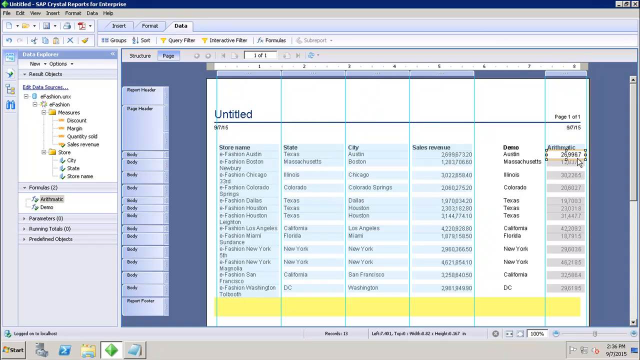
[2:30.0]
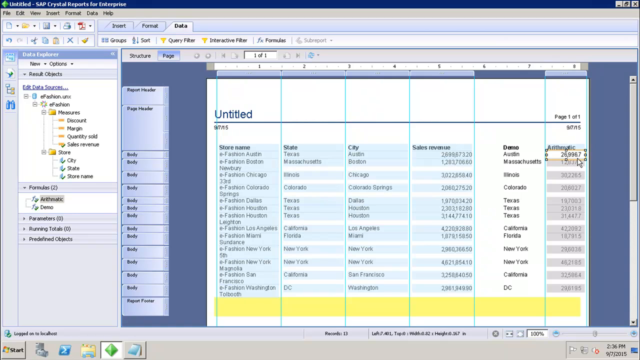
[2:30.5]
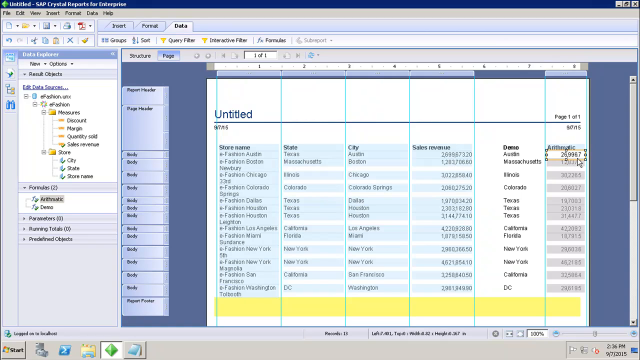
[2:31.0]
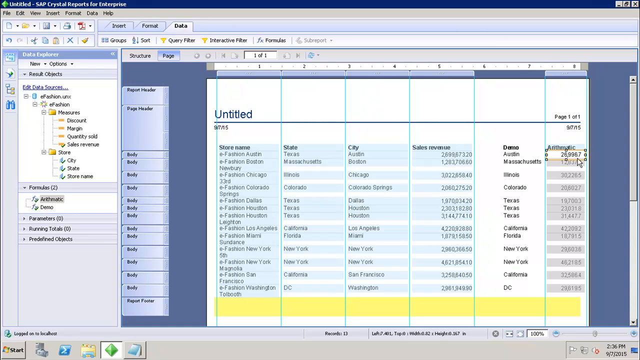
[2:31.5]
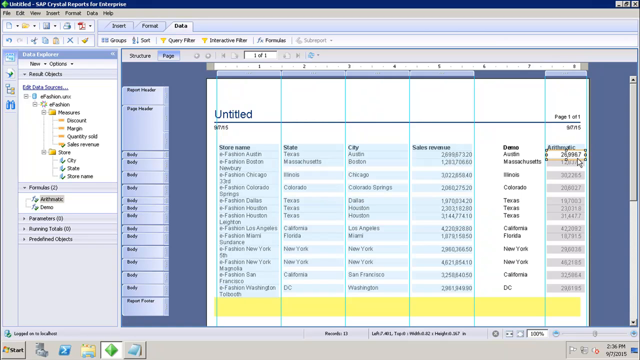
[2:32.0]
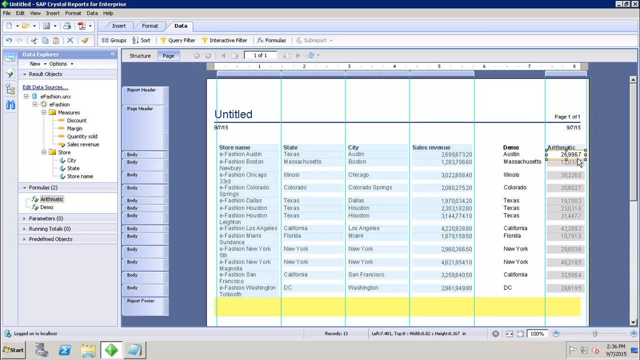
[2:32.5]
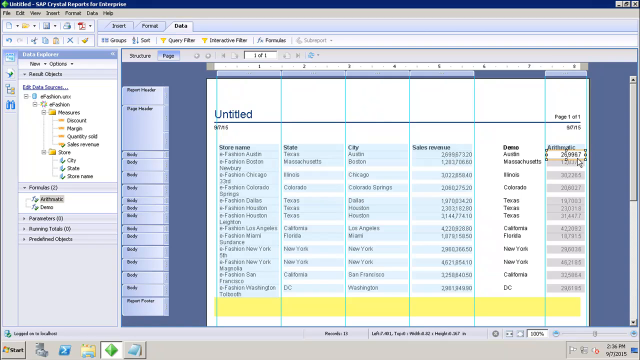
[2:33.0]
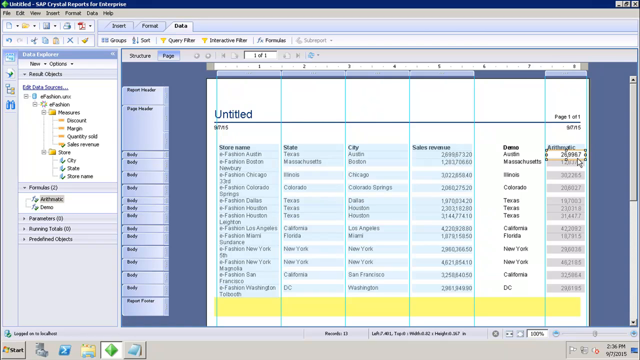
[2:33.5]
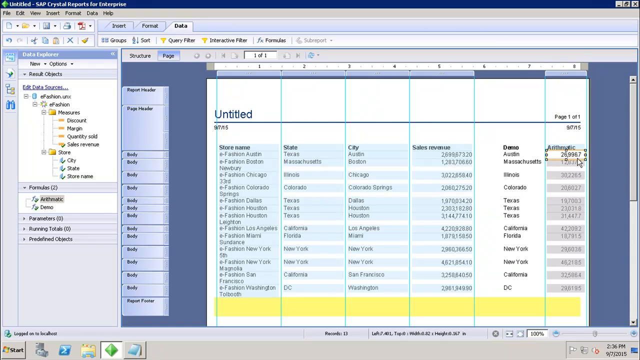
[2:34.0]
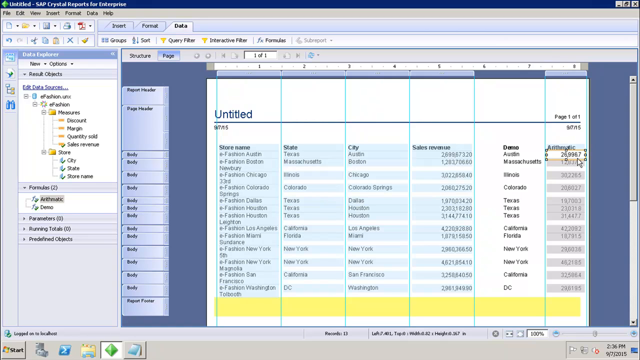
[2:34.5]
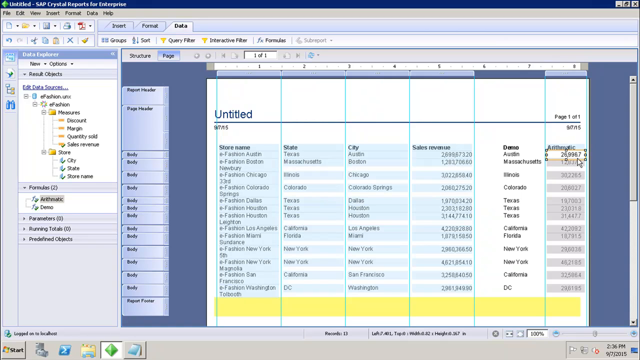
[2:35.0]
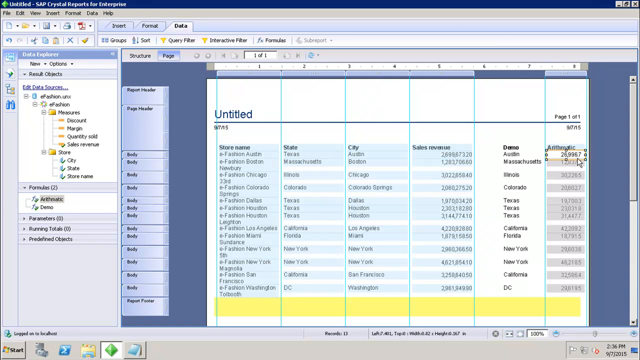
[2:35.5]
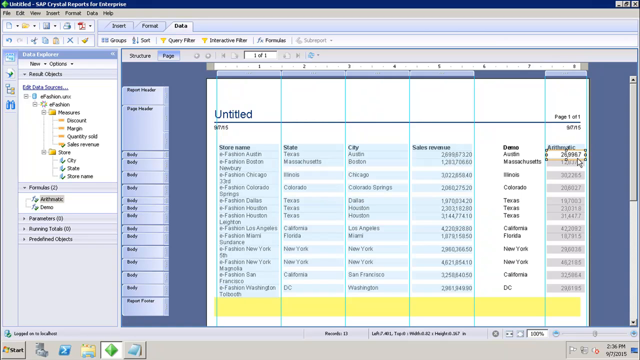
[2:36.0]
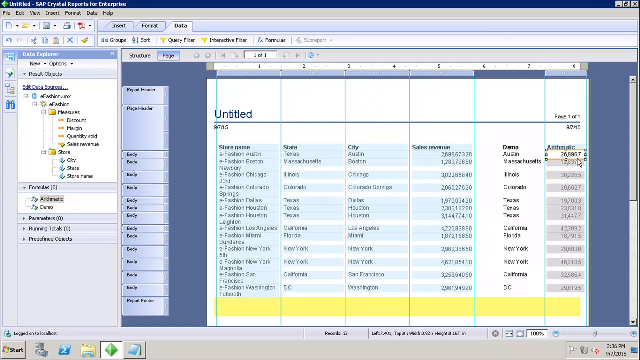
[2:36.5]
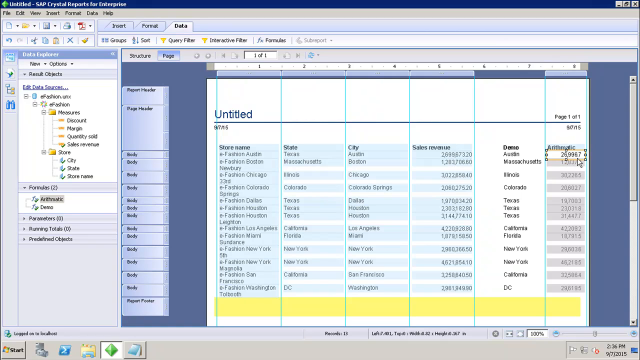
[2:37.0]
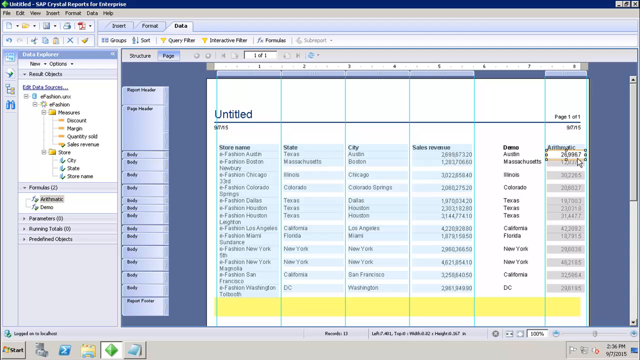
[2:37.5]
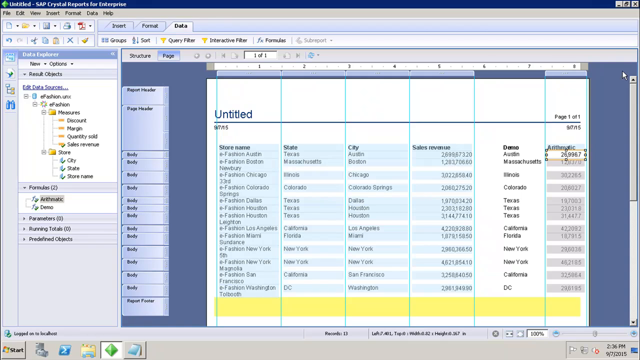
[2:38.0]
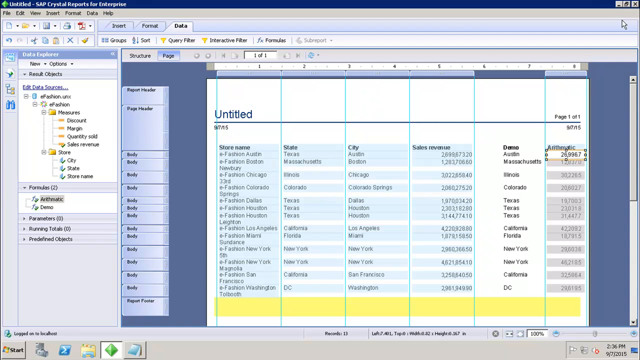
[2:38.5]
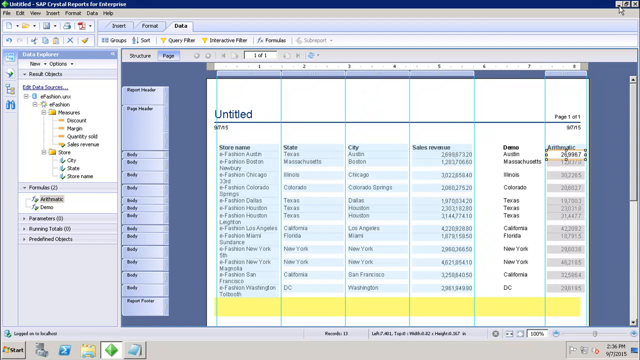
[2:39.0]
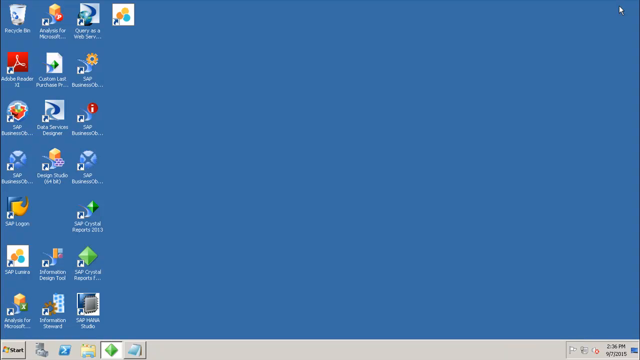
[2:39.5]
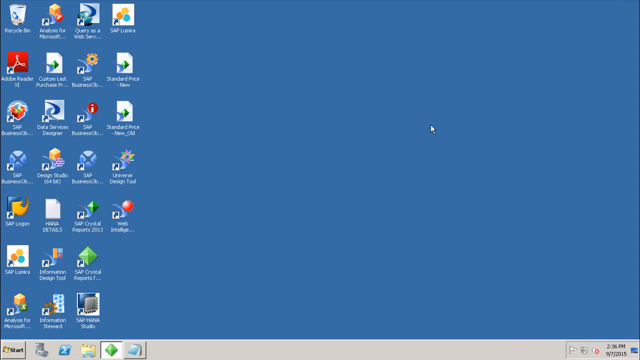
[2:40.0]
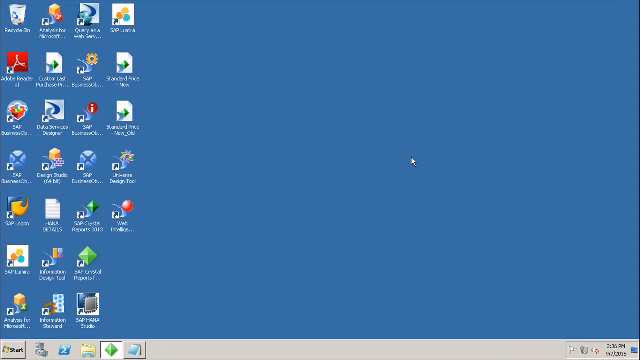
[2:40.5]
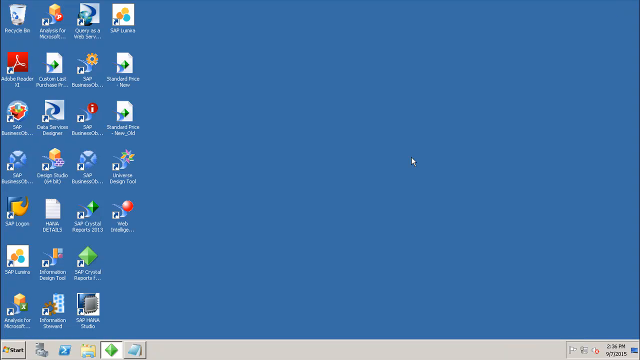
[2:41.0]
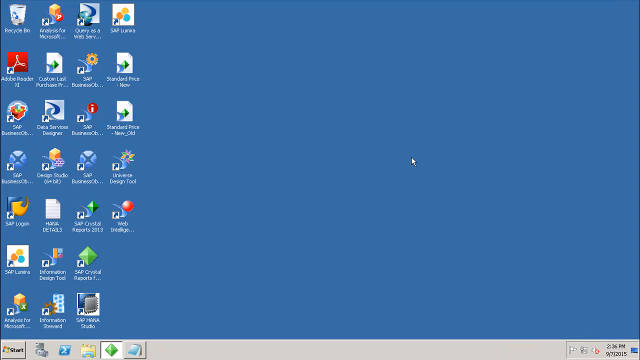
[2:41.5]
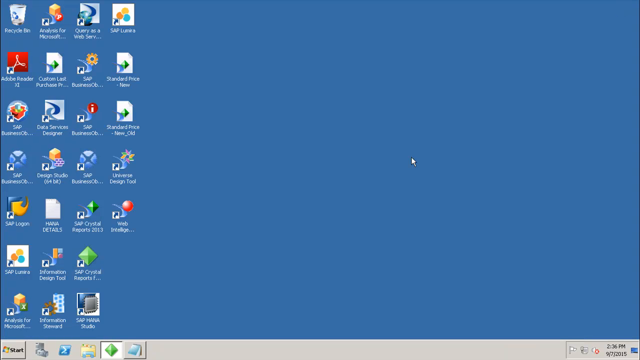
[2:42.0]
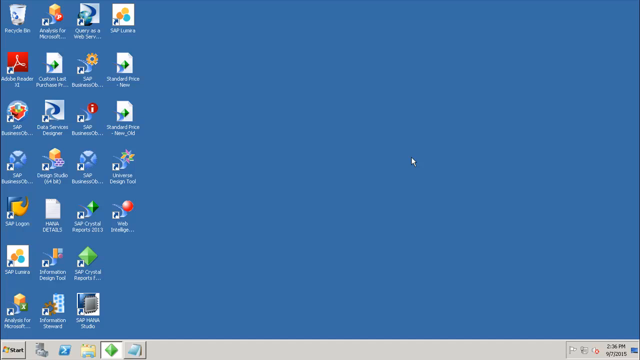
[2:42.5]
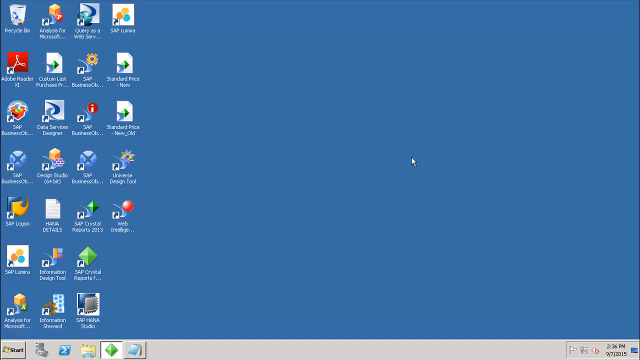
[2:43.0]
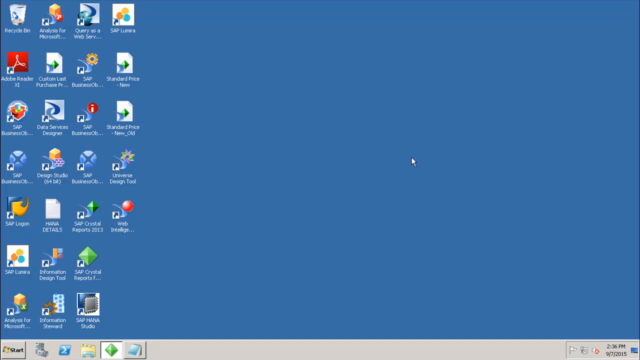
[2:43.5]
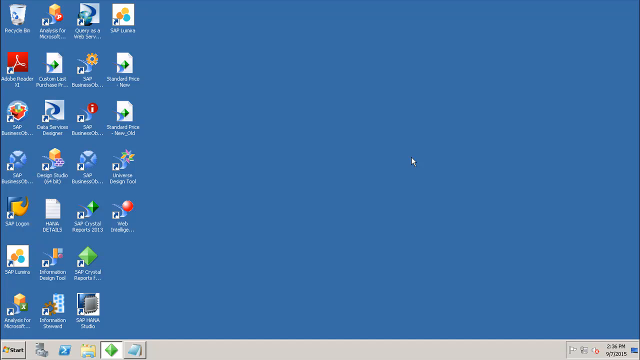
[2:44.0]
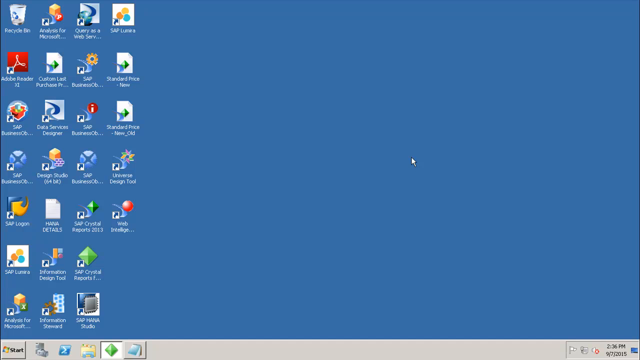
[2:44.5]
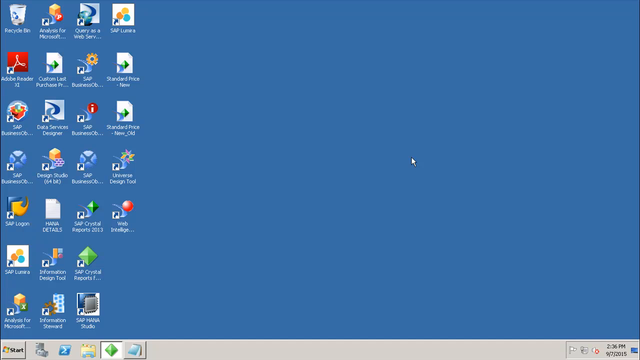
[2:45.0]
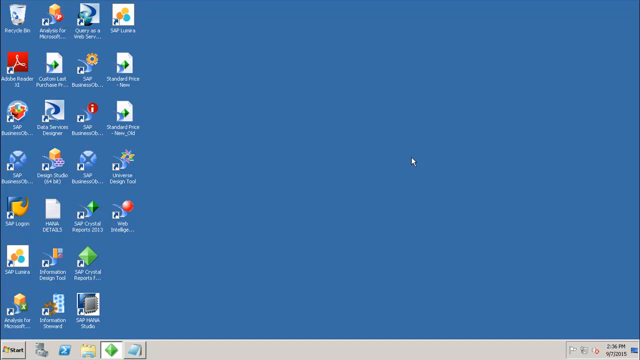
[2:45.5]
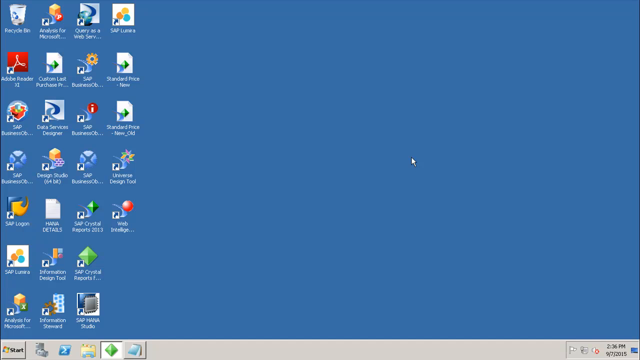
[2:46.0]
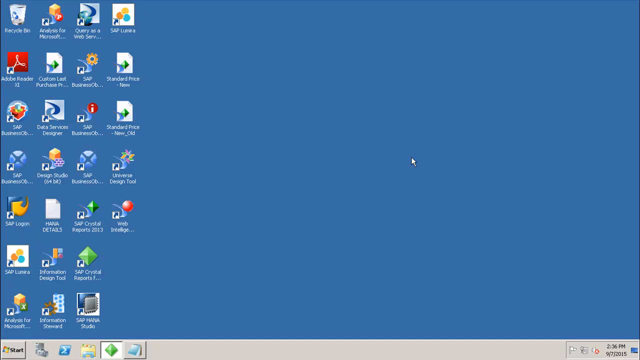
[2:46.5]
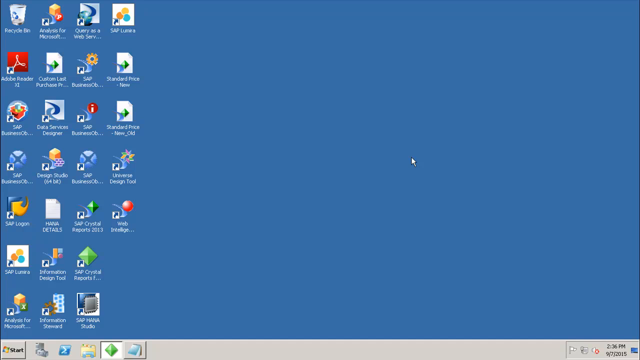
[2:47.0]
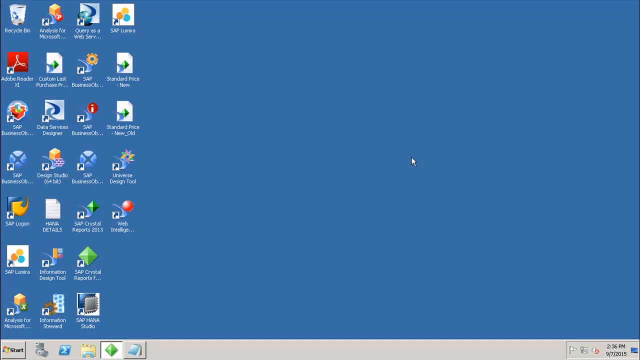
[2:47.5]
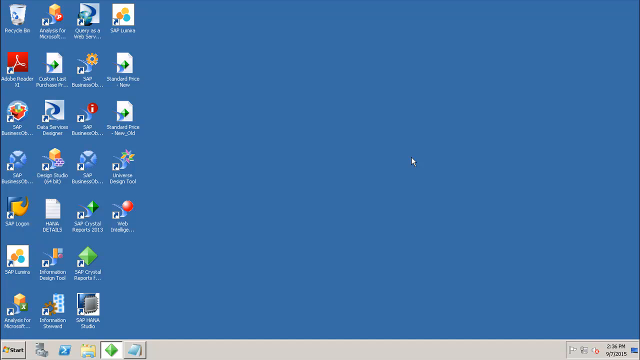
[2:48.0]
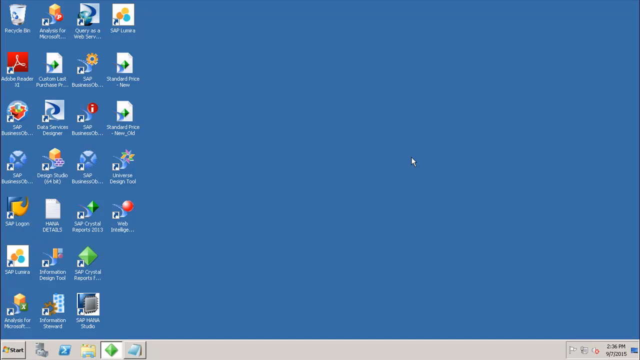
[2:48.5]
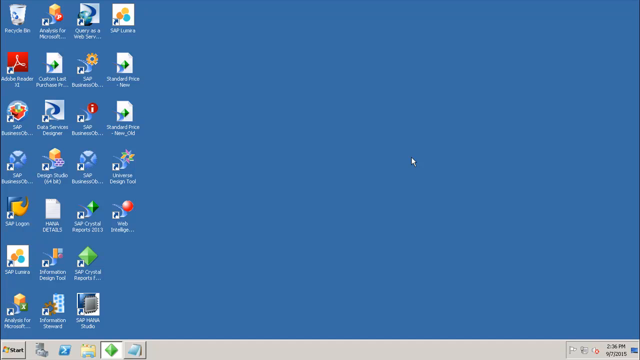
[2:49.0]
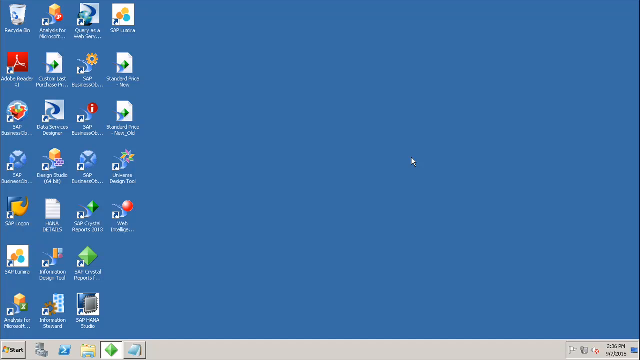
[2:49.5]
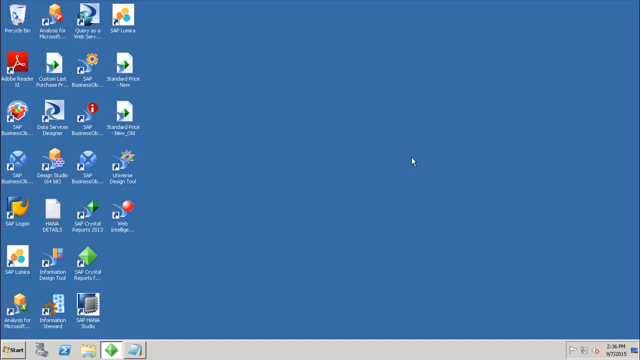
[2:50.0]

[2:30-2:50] The person is still adjusting what appears to be a chart. Aquamarine lines run down vertically, starting to the left of the word "untitled," which is in blue in the upper left-hand corner. The cursor is in the first cell under arithmetic and is then moved over to sales revenue. The arithmetic view stays for a few seconds, then the person clicks the line in the upper right-hand corner to minimize the window. The desktop appears, with a solid blue wallpaper, a trash can and Adobe among the items. Some items are blurry, but one looks like SAP. The icons are arranged in five rows of four, with a last row at the bottom that has one less icon.